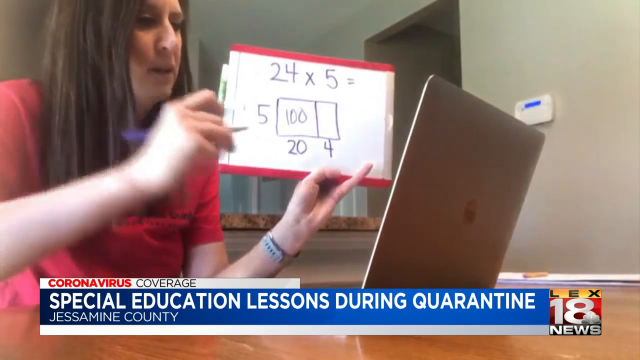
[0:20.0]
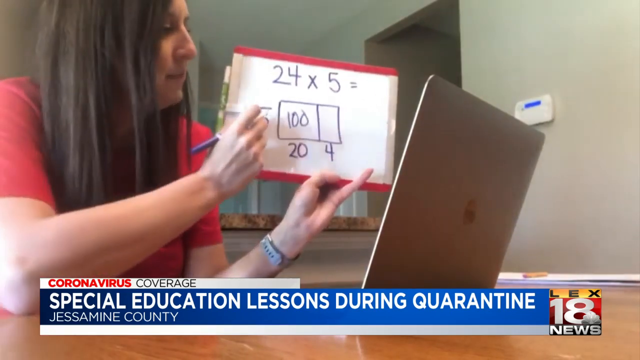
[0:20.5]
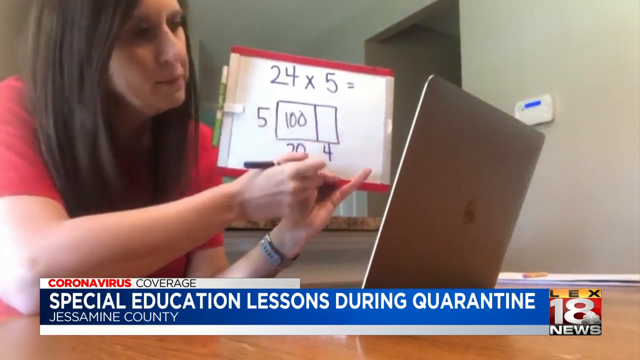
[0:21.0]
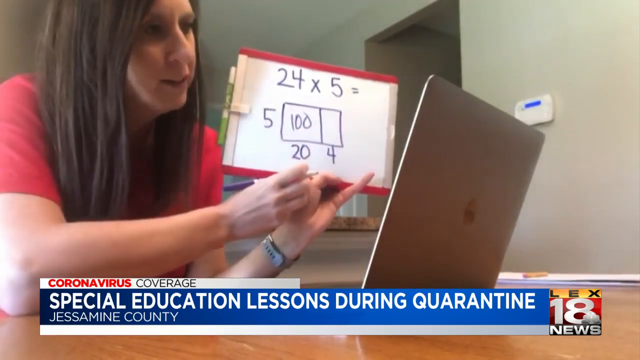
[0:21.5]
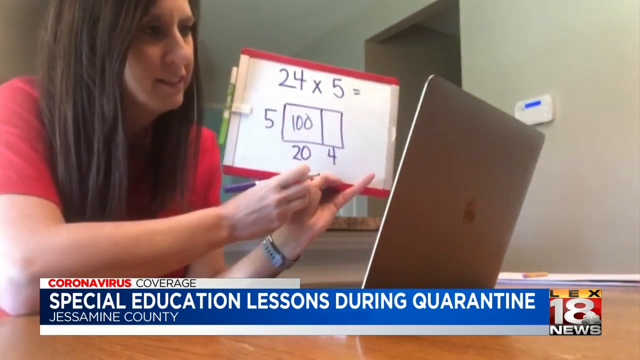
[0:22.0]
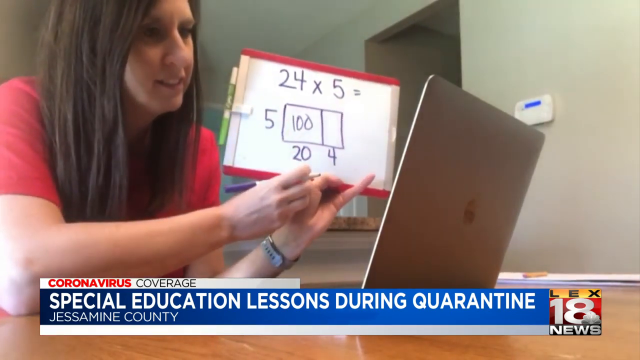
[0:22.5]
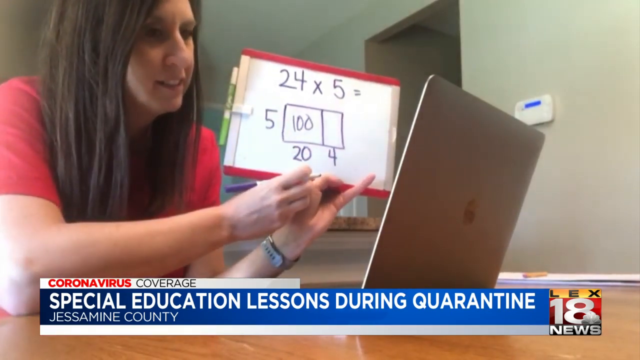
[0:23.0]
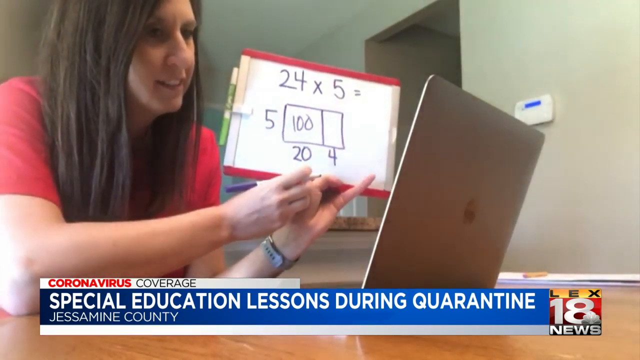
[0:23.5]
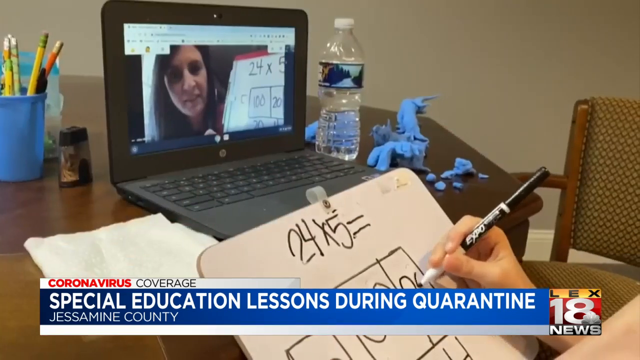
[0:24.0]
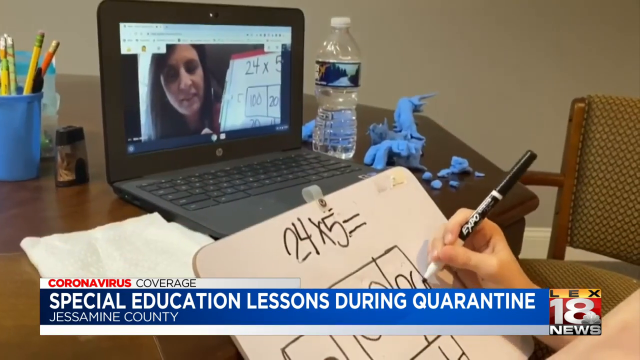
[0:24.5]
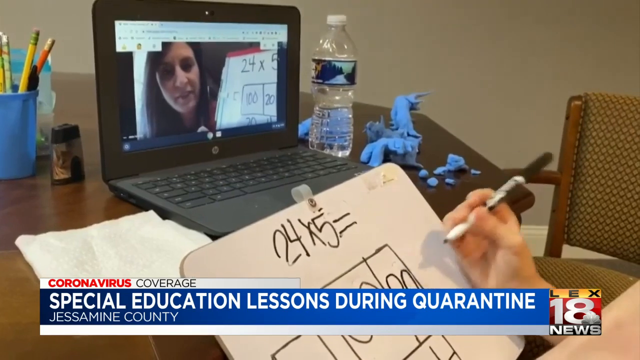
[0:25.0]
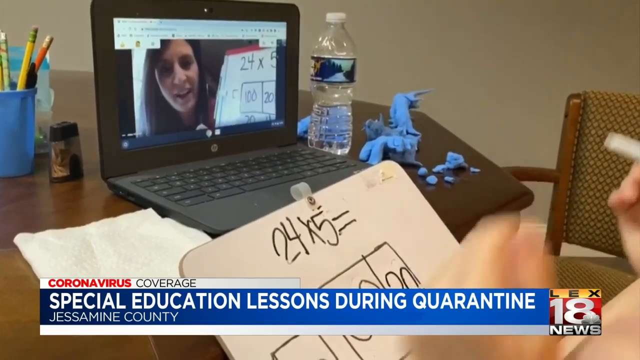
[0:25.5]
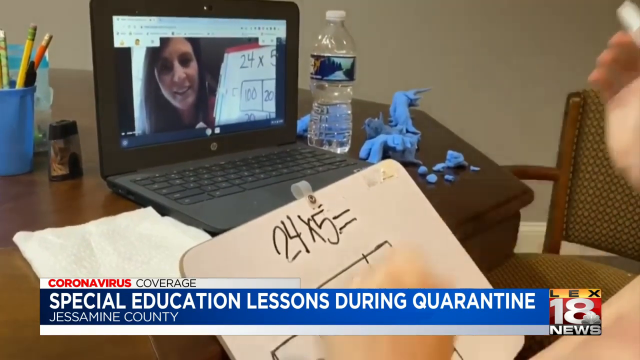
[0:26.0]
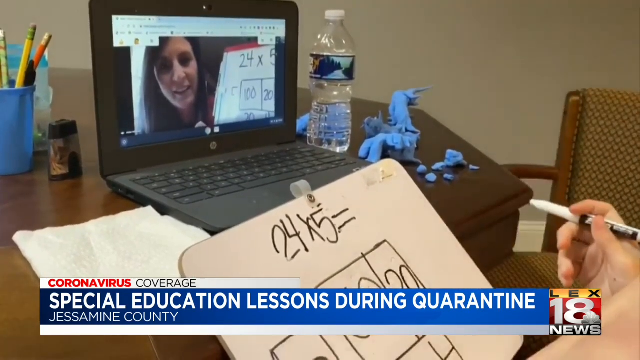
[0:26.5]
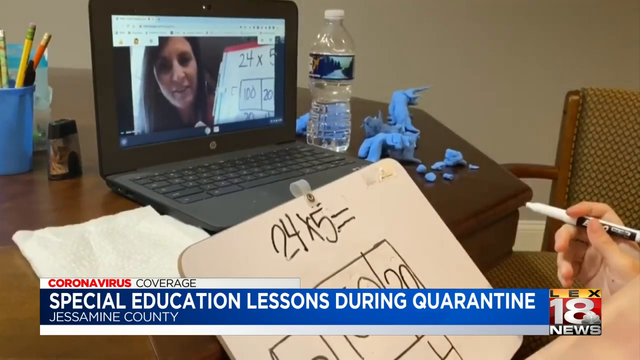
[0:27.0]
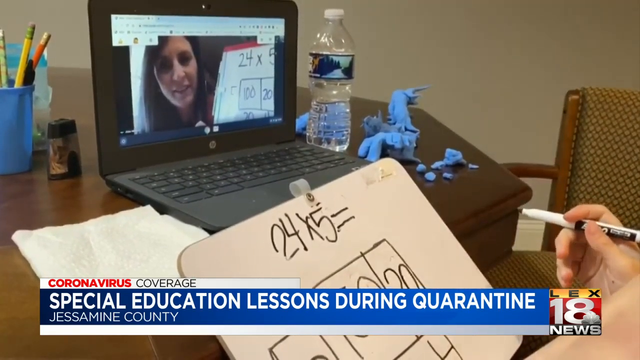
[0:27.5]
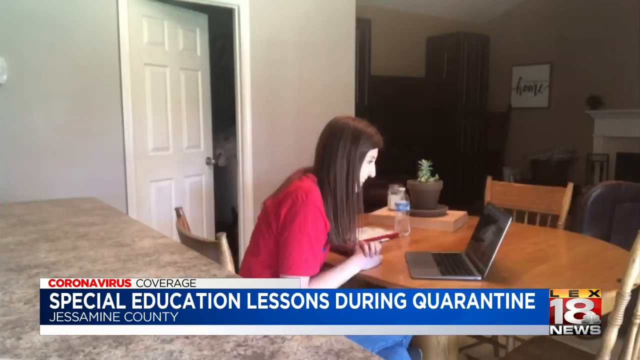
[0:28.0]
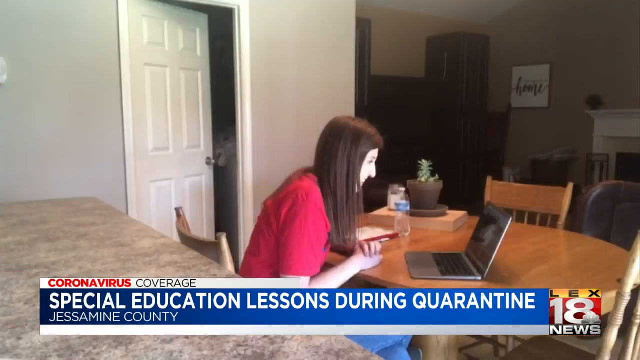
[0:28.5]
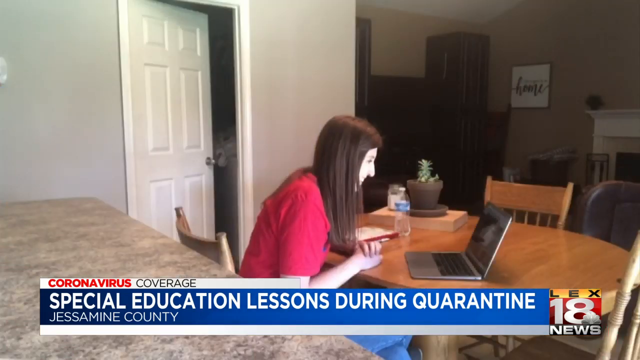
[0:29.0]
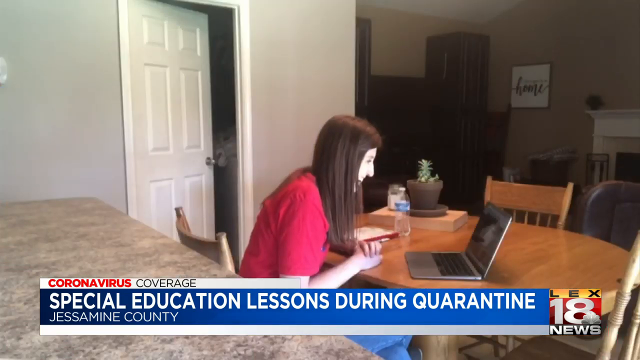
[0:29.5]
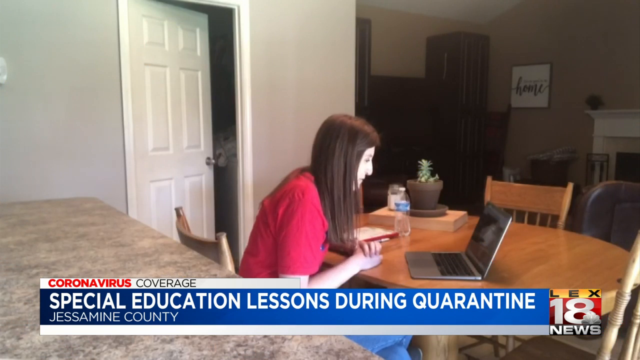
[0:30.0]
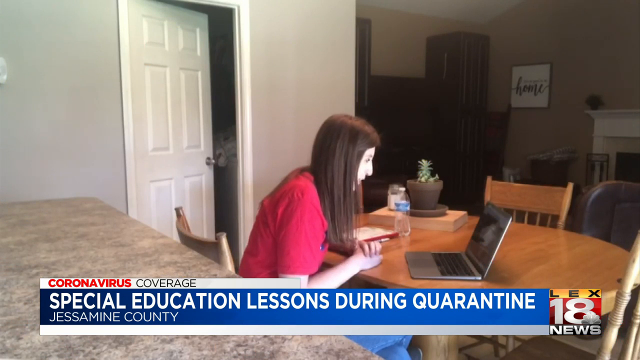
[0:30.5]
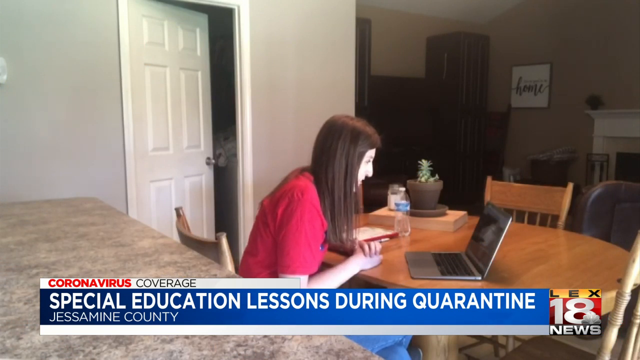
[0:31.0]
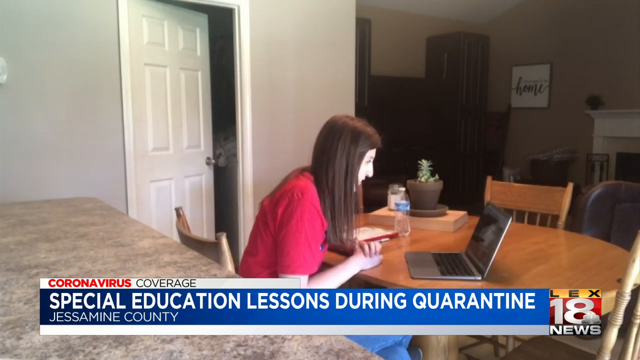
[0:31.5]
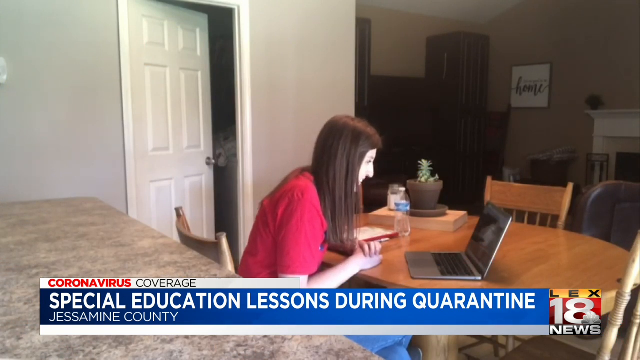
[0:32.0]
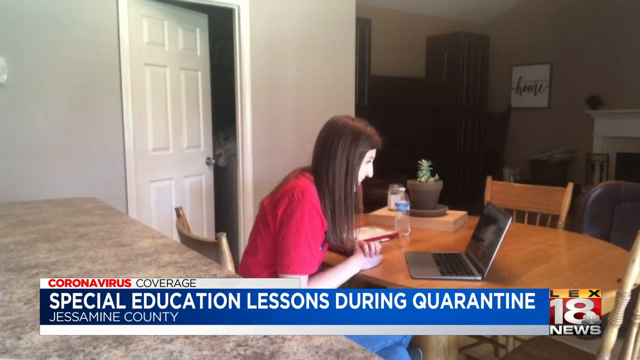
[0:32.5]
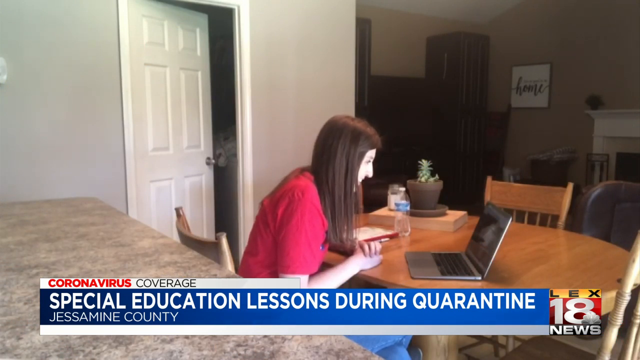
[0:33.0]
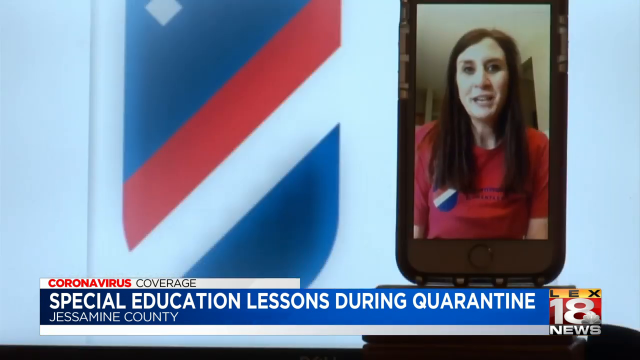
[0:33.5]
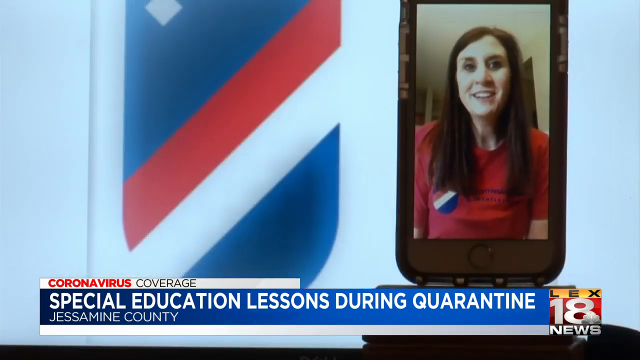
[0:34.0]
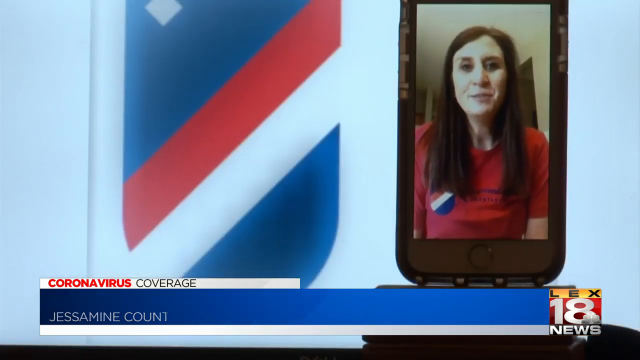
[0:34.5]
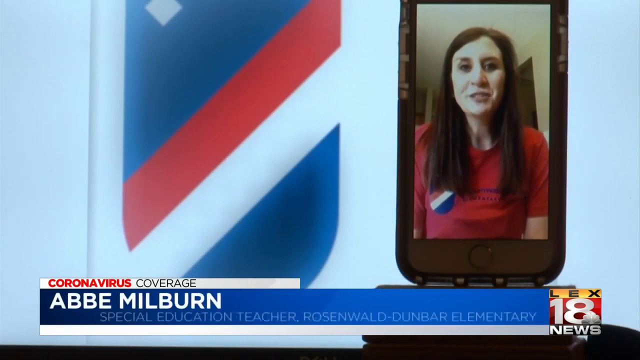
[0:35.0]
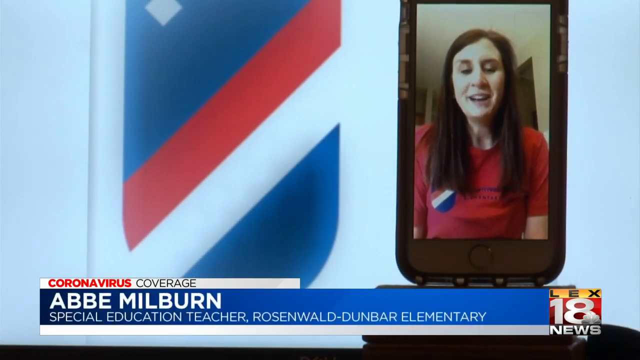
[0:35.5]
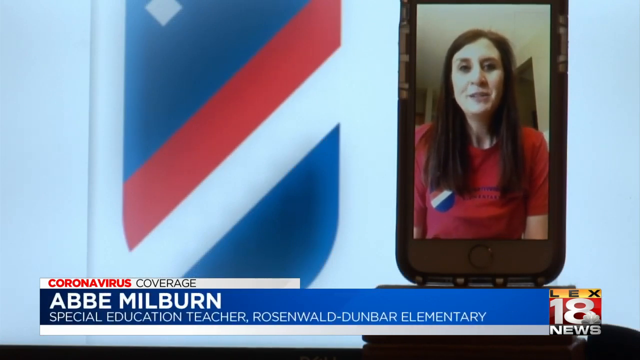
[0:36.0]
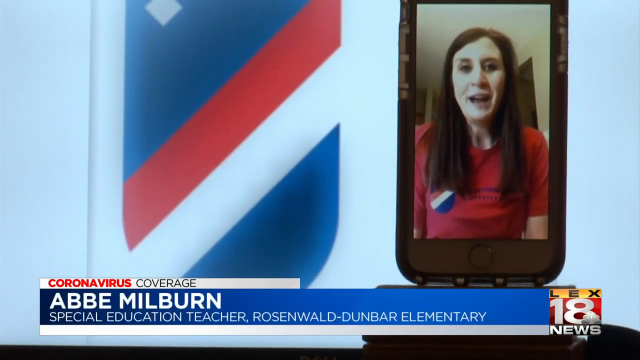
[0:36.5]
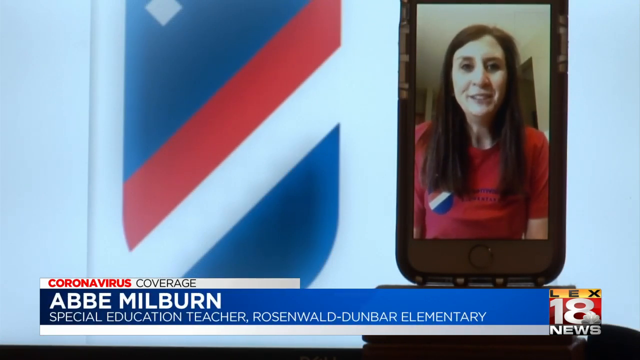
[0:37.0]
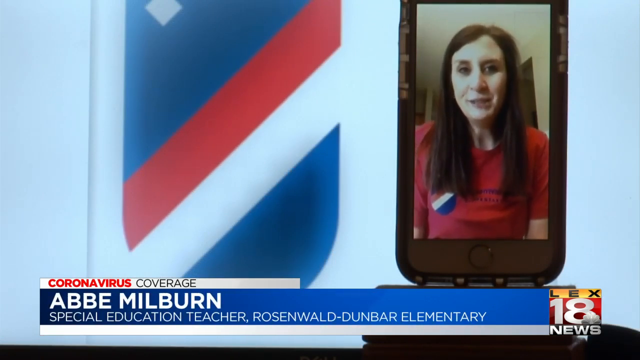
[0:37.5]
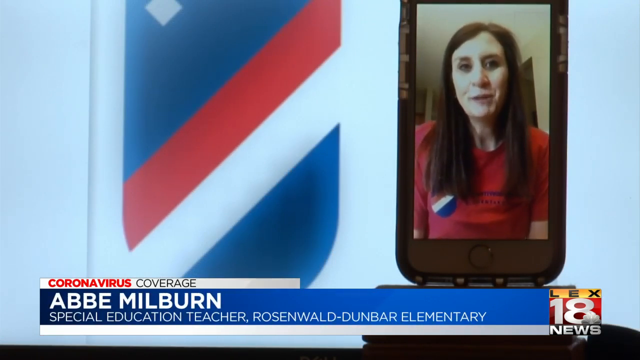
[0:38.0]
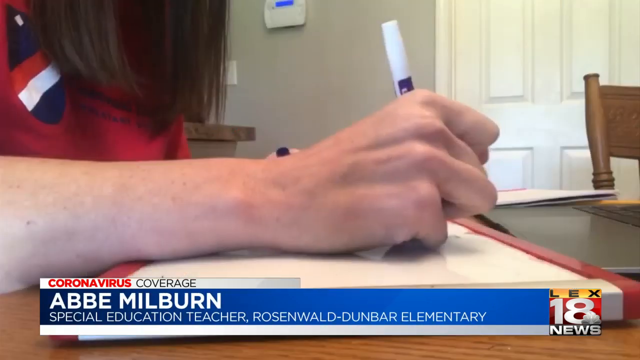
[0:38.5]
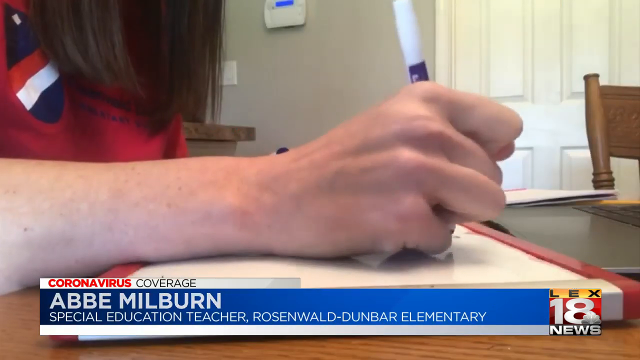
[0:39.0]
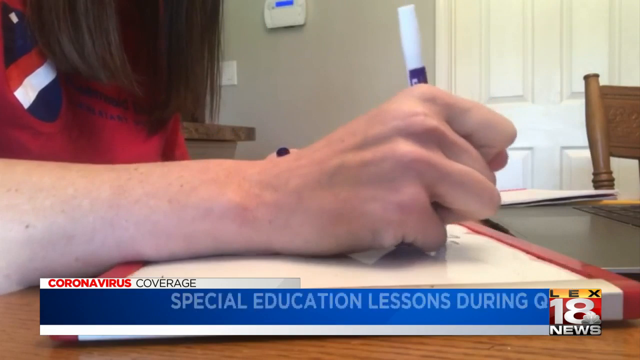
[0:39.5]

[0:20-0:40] A woman is on the laptop, pointing at something on a board behind her. The board is red and white and shows 24 times 5, with 5, 20 and 4 written on it; 5 and 20 equals 100, shown in a square. The text "Coronavirus coverage, special education lessons during quarantine" appears. She holds a scoreboard and talks to her students, holding a pen in her right hand. On the other side, another student sits in front of the laptop. She types 24 times 5. The woman is in some kind of kitchen; a door is open on the left side, and there is a fireplace on the right side, with other chairs on the right.